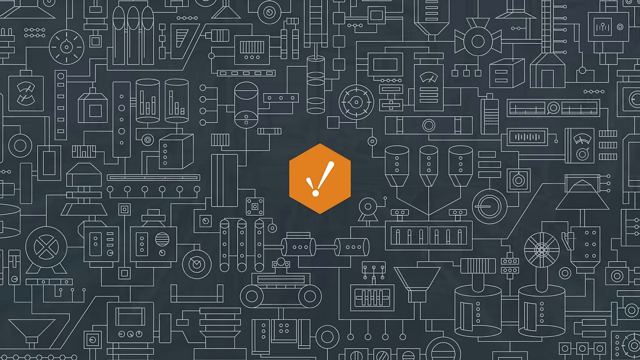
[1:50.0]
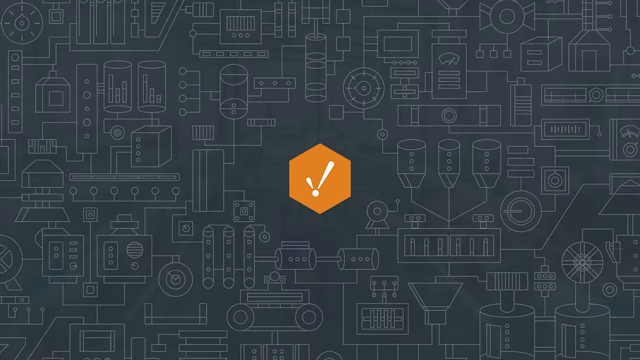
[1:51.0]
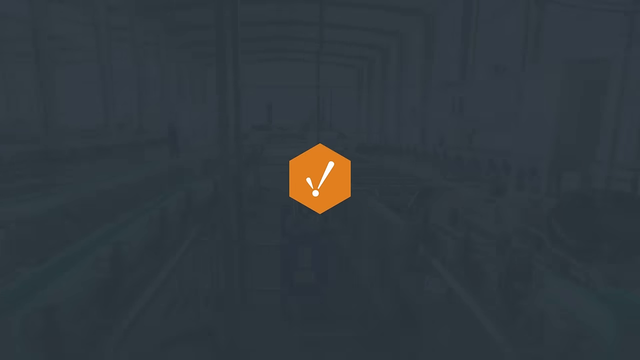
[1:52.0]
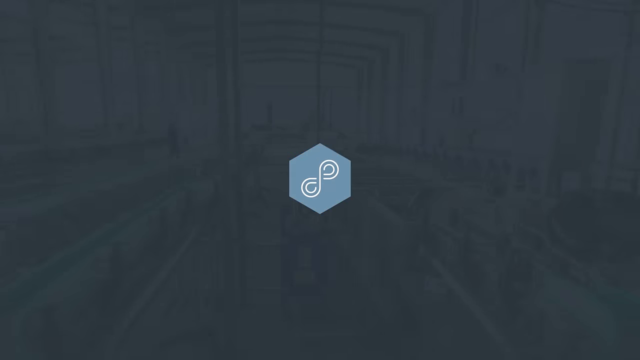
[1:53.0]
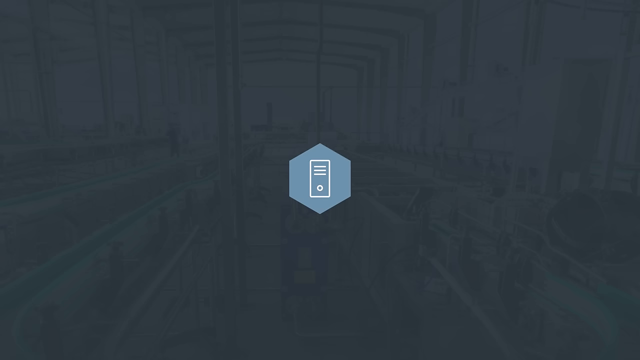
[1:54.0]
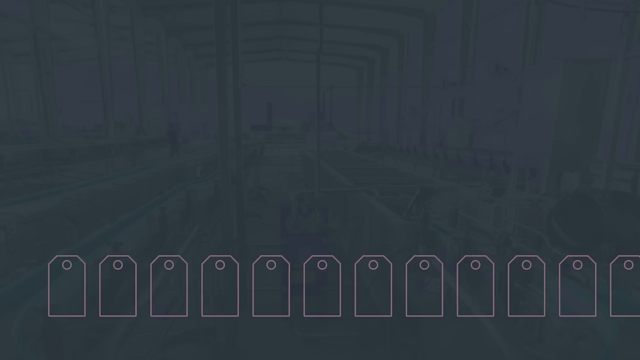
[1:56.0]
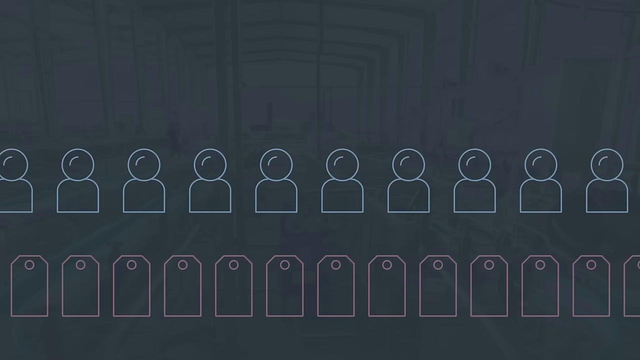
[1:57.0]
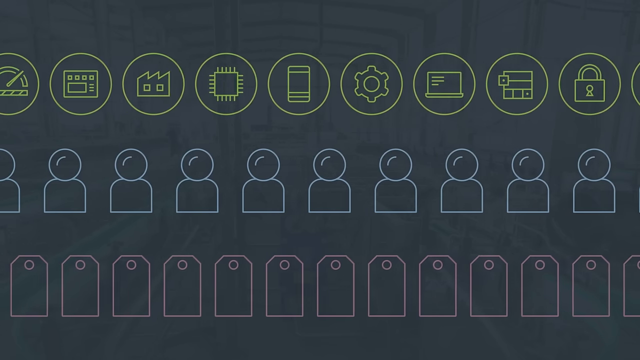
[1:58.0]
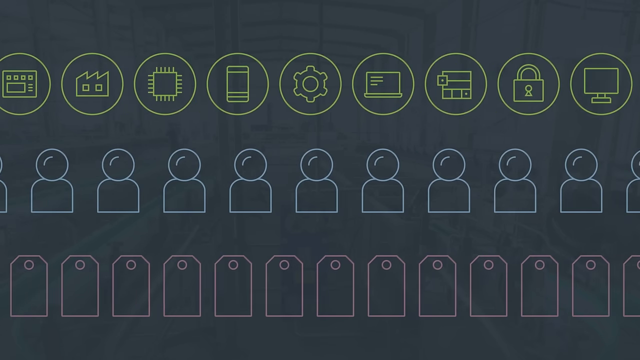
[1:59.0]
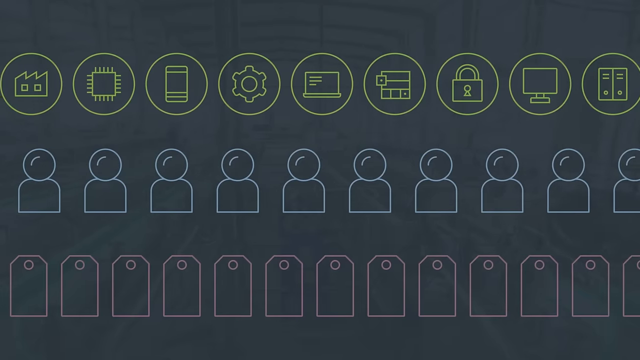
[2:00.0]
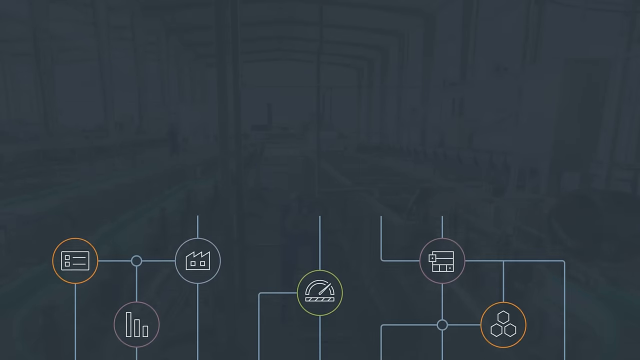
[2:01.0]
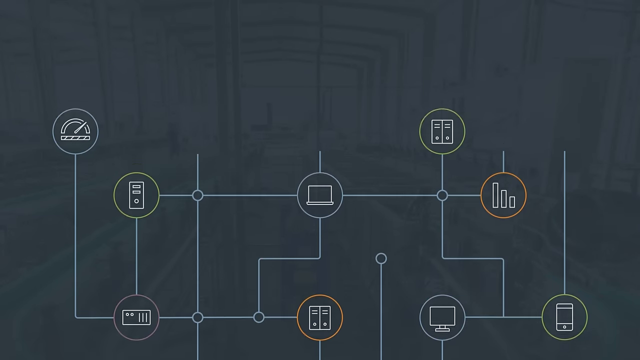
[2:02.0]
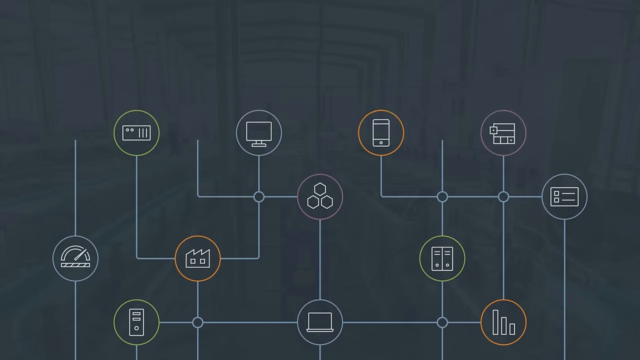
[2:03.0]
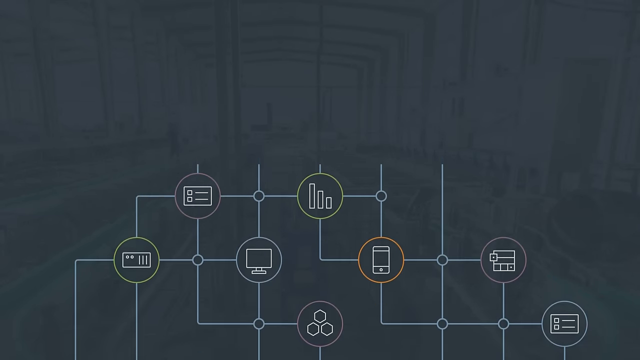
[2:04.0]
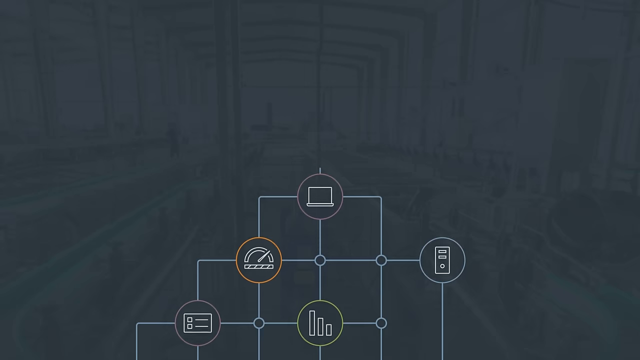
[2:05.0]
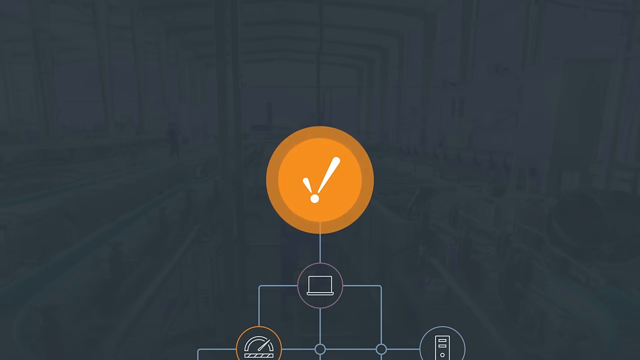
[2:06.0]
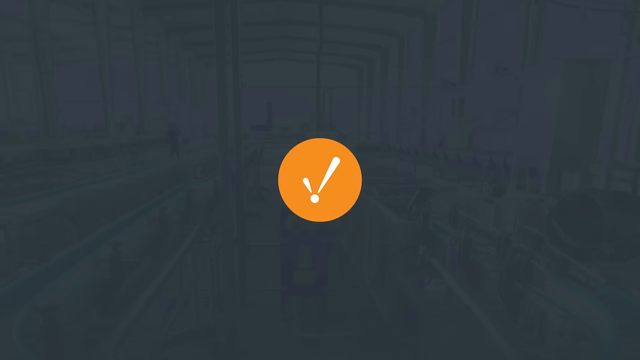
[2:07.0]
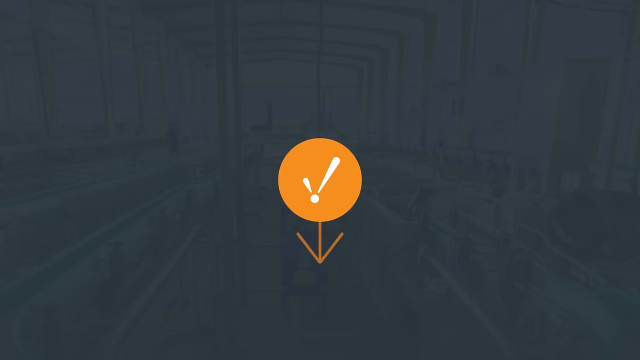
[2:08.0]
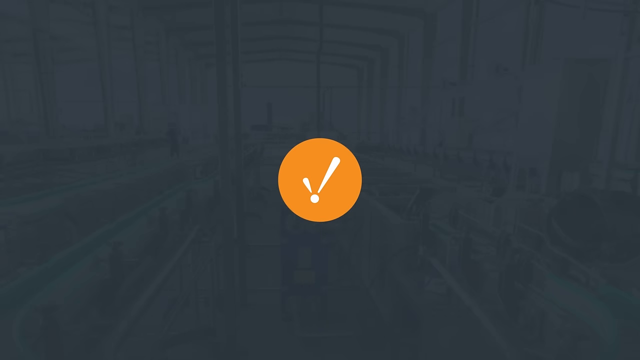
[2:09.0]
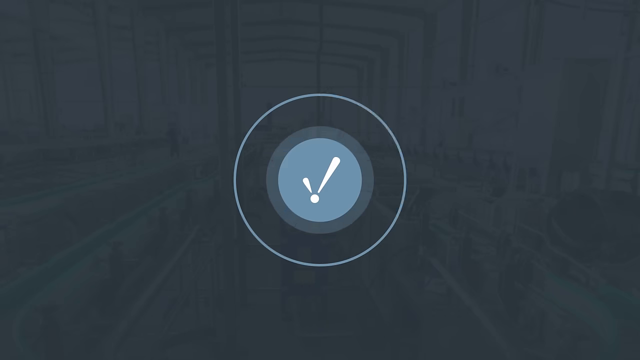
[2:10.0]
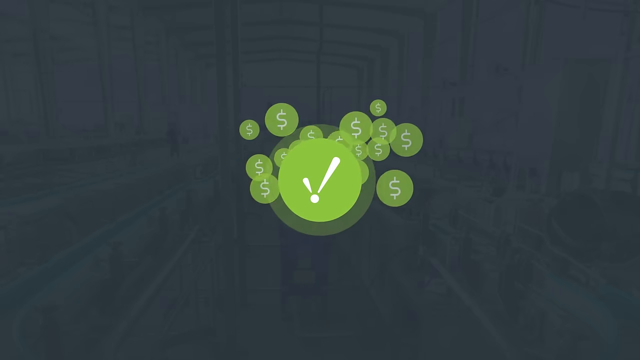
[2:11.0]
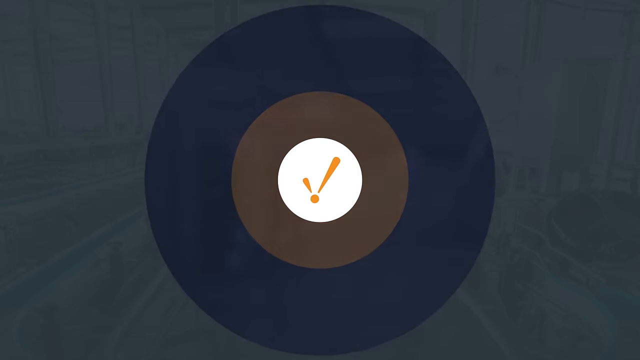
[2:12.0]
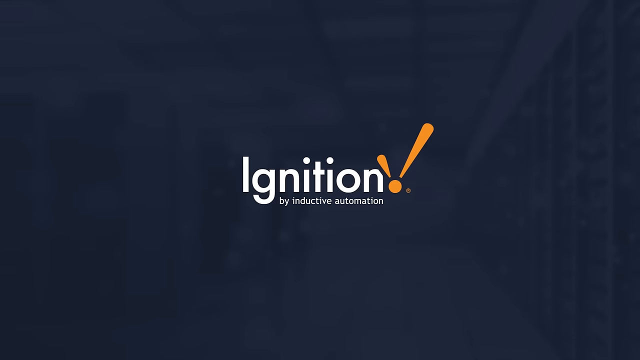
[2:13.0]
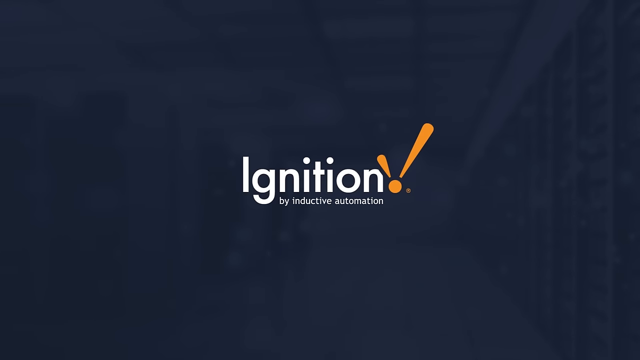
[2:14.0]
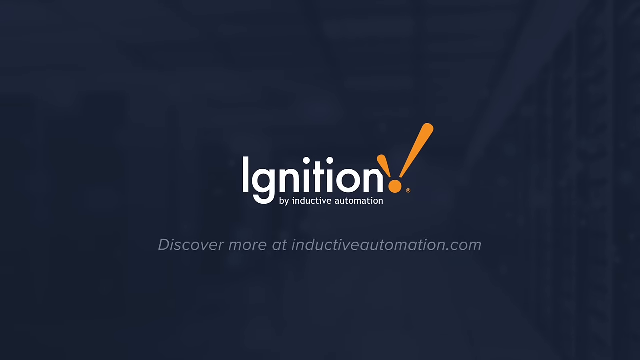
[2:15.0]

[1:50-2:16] The orange hexagonal shape has designs circling around it. The orange box remains while the surrounding designs fade out. The orange box turns into a gray box with a dollar sign, then the same gray box with what looks to be a tilted infinity symbol in the middle, then what looks to be a tablet in the middle. The gray box disappears. A row appears at the bottom of the screen, along with a middle row of people, and up top there are many technology-related symbols, such as a cog, pages, computer chips and locks. Each of the rows rotates. All of that fades into a screen of interlocking brackets, which eventually leads to the same tick mark seen earlier.